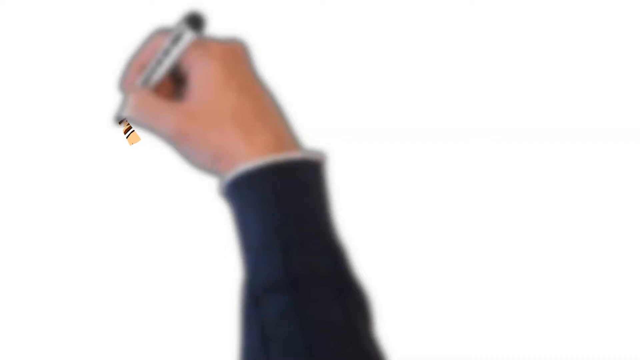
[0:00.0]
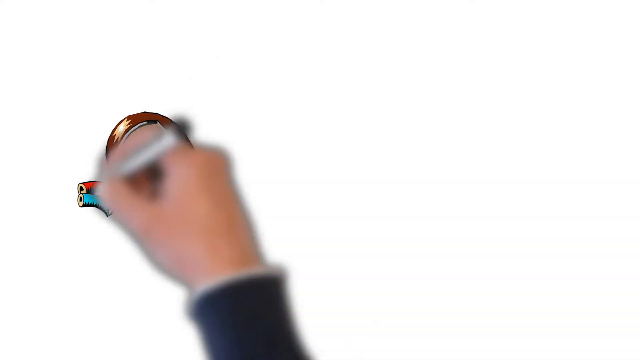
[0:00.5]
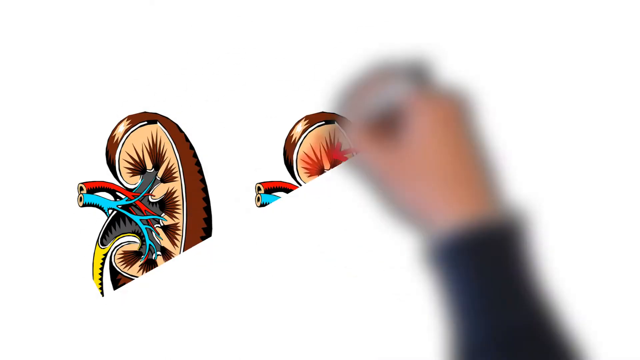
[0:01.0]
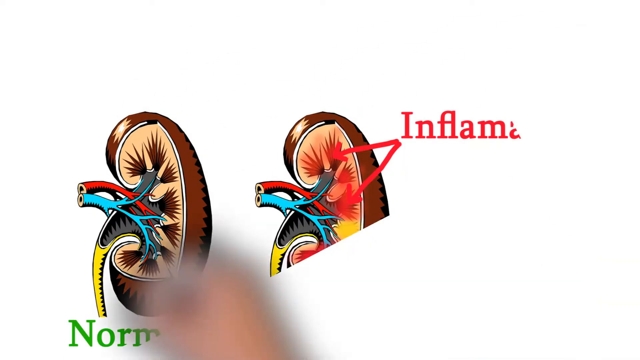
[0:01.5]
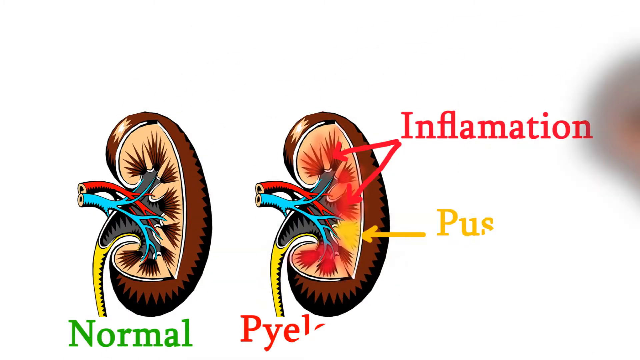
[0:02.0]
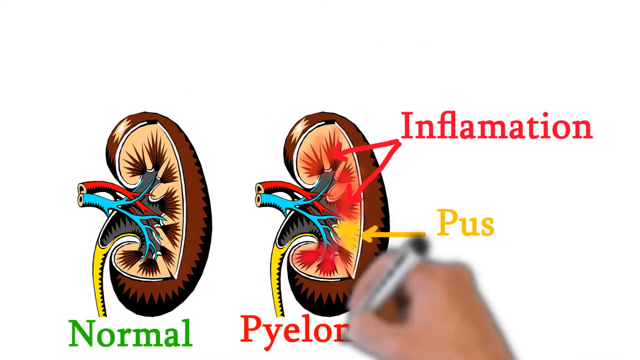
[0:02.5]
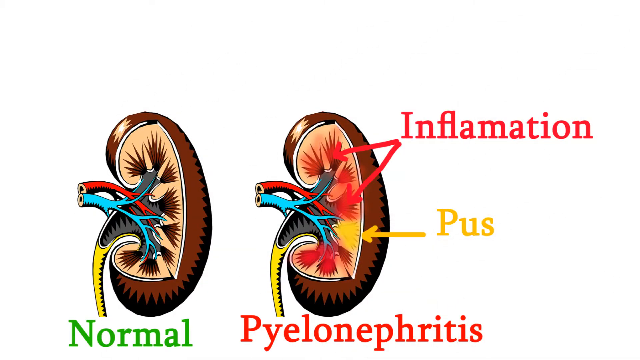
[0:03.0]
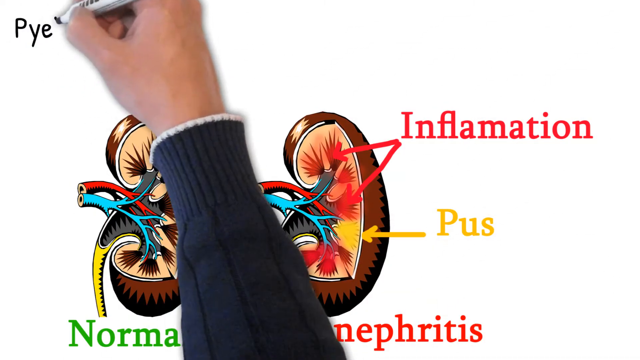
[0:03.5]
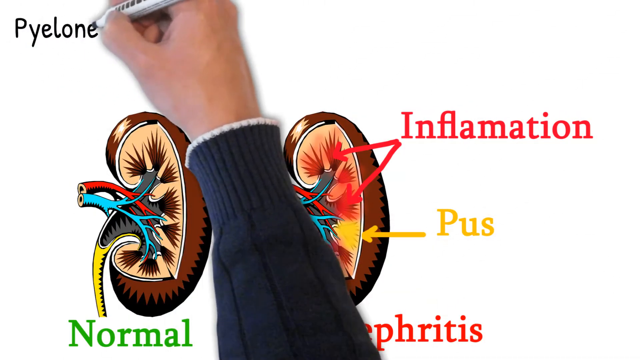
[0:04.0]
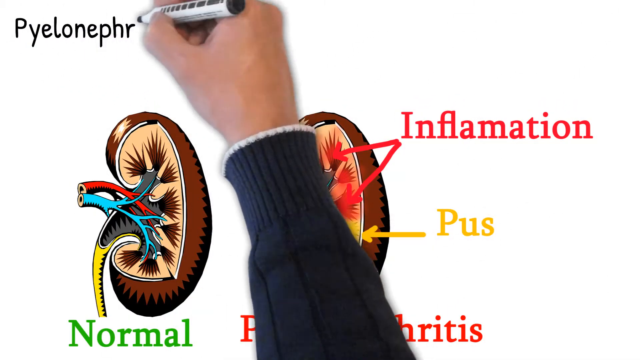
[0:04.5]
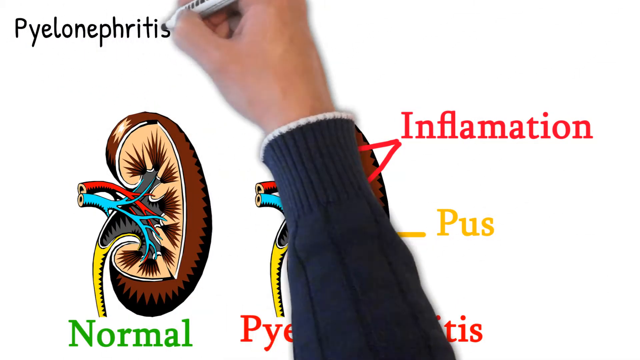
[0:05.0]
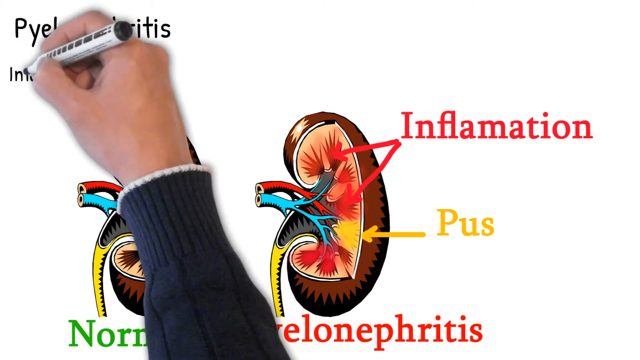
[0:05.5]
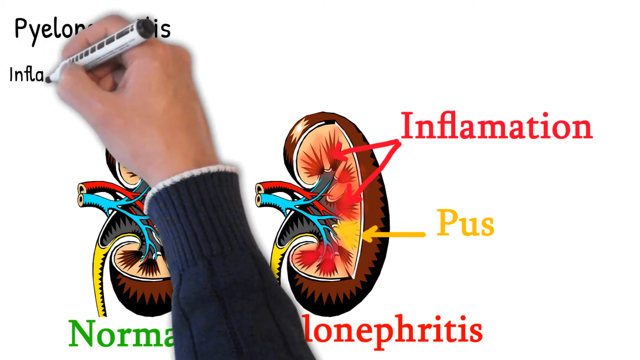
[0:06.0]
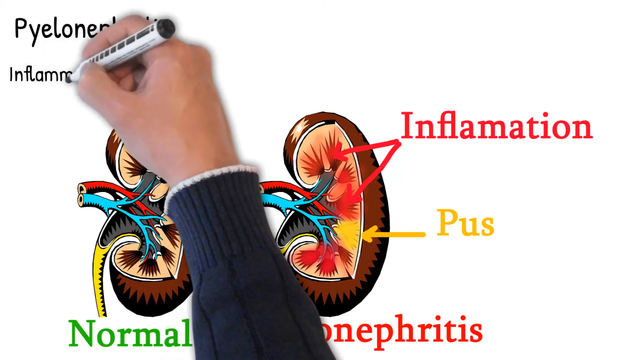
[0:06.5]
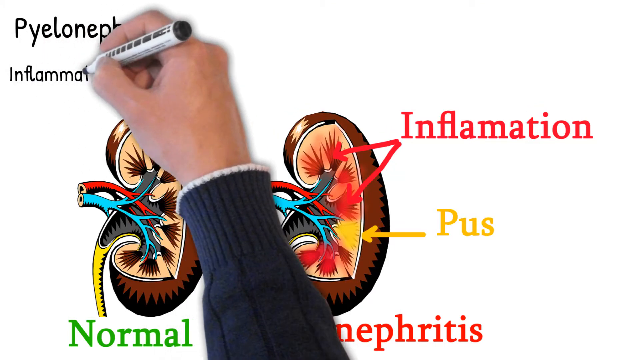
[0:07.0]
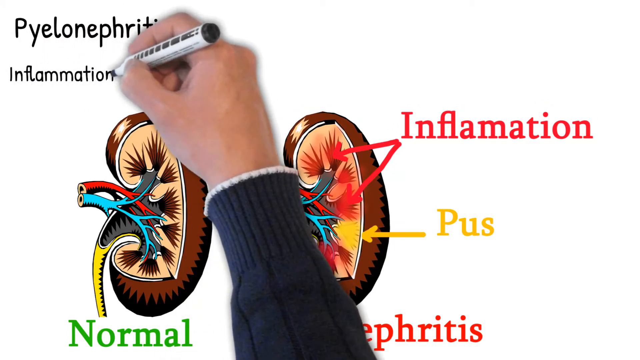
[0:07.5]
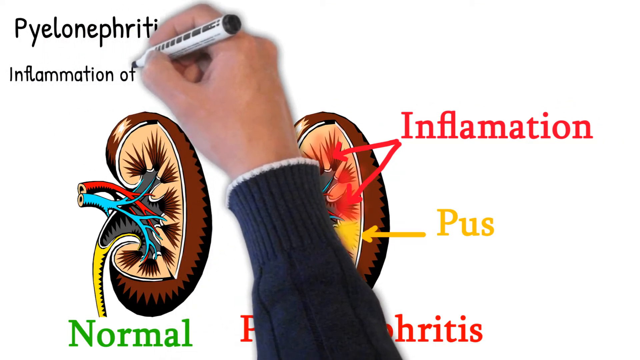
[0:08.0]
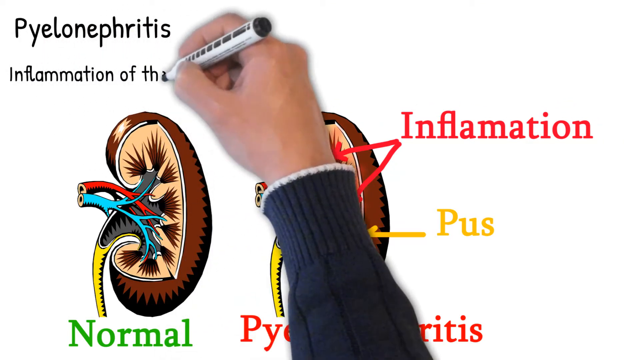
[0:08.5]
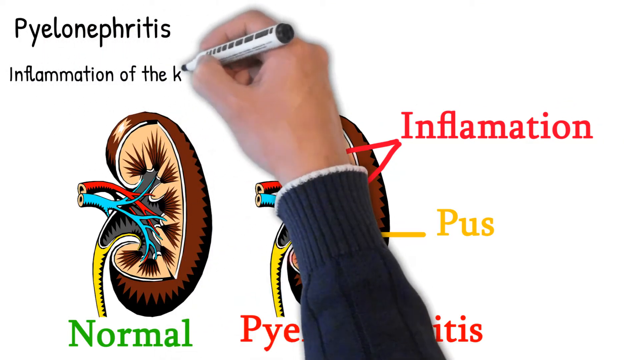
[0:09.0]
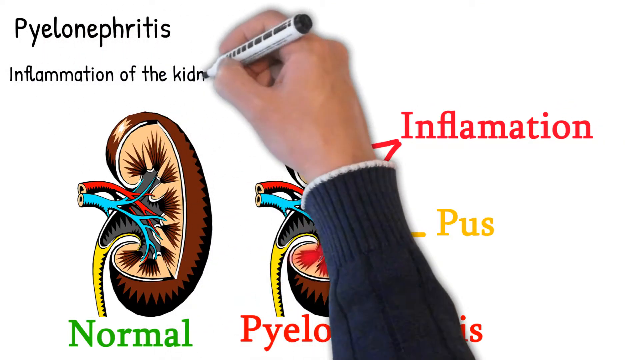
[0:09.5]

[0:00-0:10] A man writes with a marker on a whiteboard. One of the things he shows looks like two kidneys: a normal kidney and a kidney with pyelonephritis, showing inflammation and pus. "Inflammation" is written in red, and below it "pus" is written in yellow. He writes the word "pyelonephritis". Underneath the normal kidney, "normal" is written in green. The infected kidney is labeled "pyelonephritis" in red letters, with "inflammation" in red and "pus" in yellow marking where the inflammation and the pus are in that kidney. He uses a white pen with black writing on it.